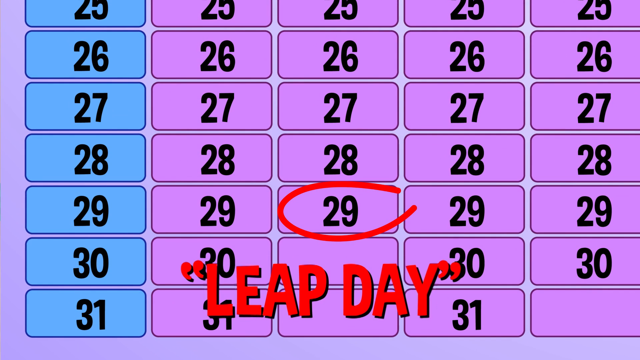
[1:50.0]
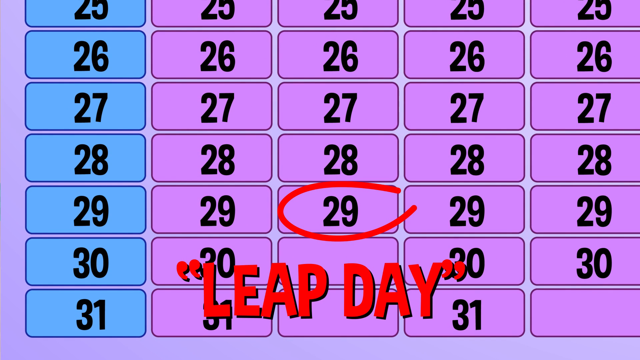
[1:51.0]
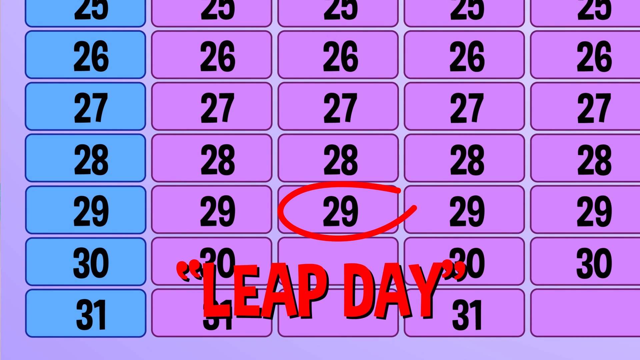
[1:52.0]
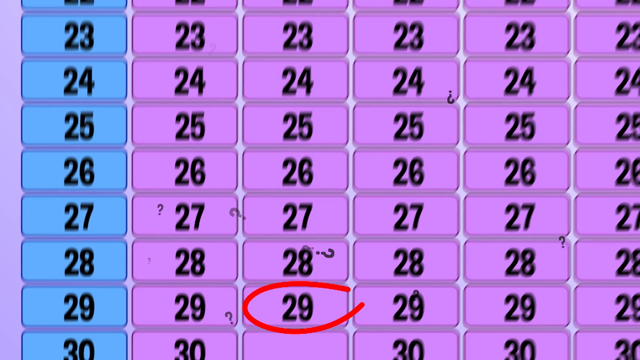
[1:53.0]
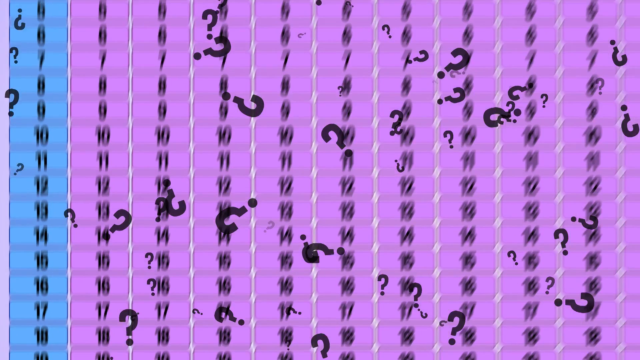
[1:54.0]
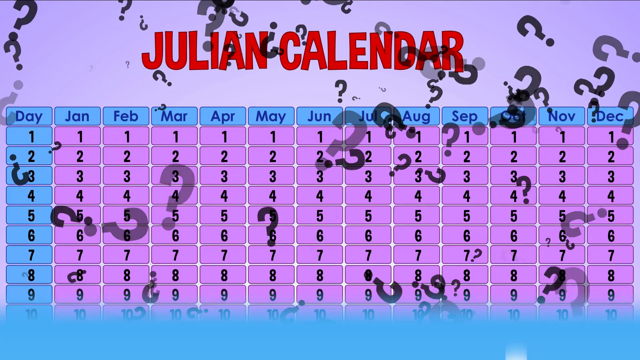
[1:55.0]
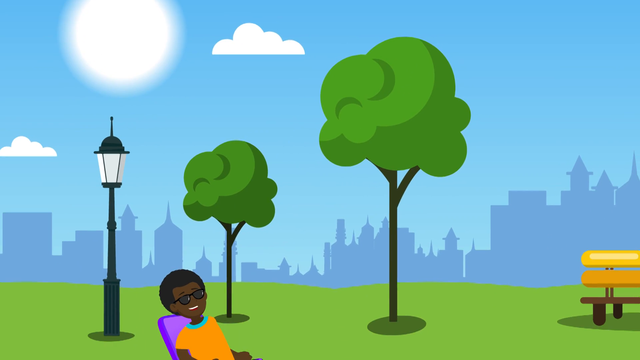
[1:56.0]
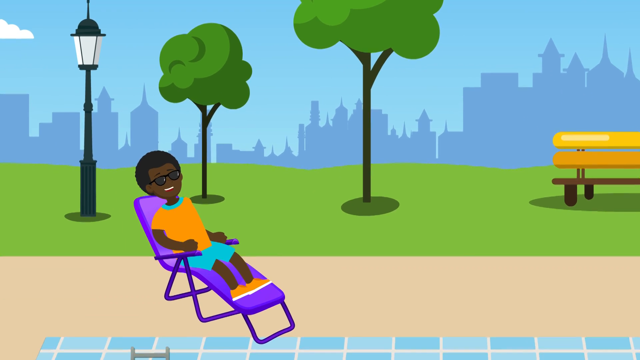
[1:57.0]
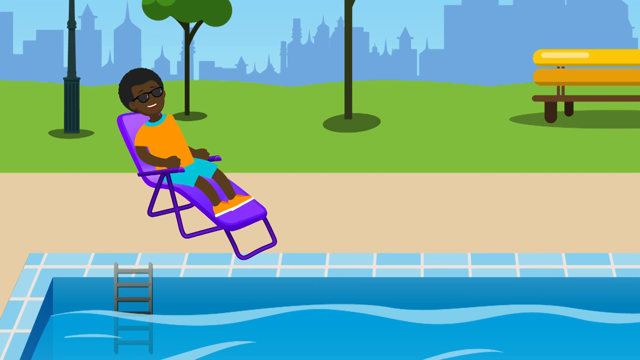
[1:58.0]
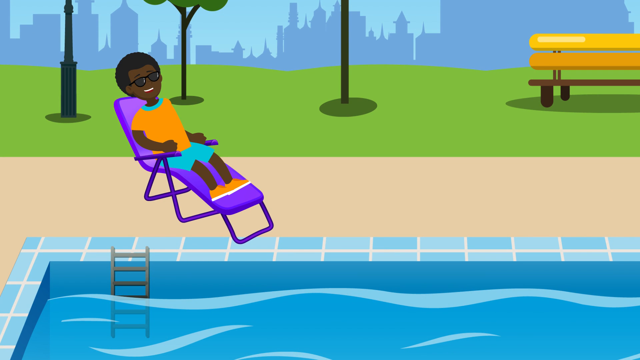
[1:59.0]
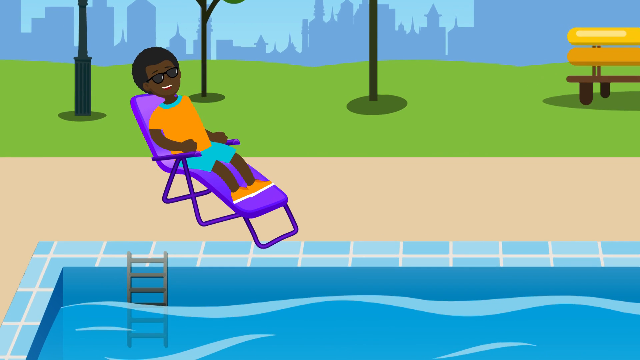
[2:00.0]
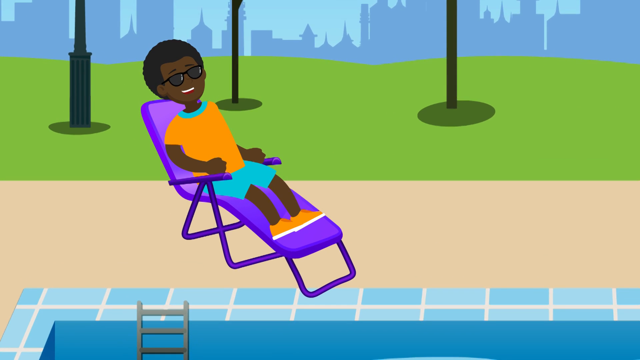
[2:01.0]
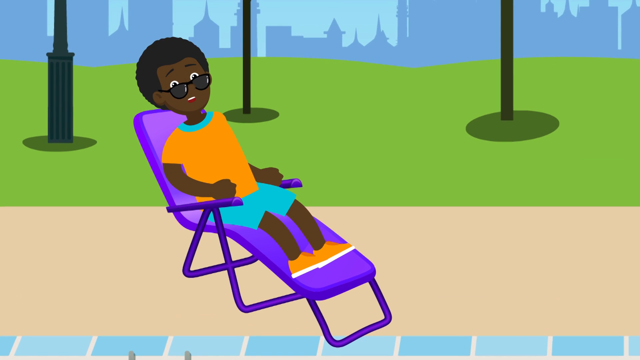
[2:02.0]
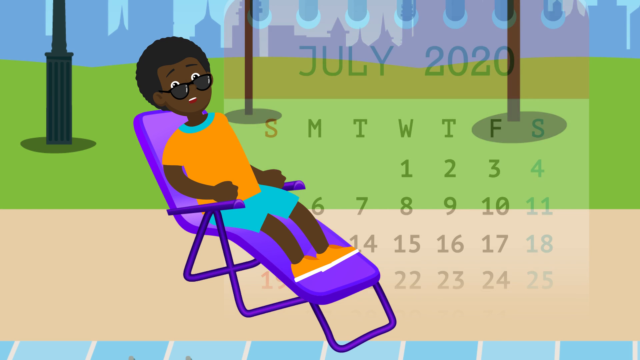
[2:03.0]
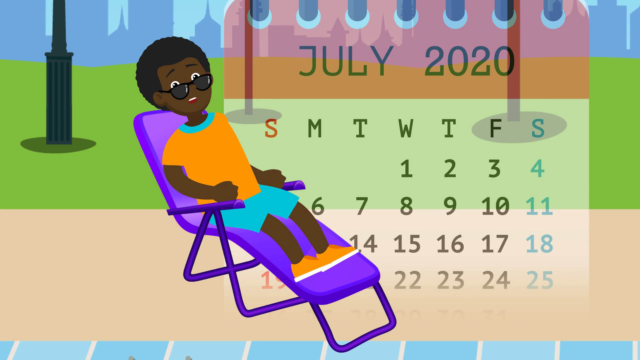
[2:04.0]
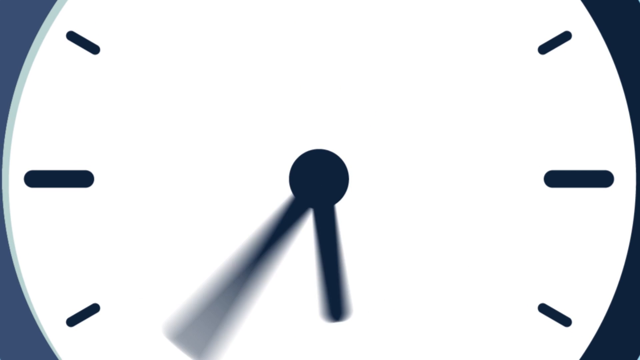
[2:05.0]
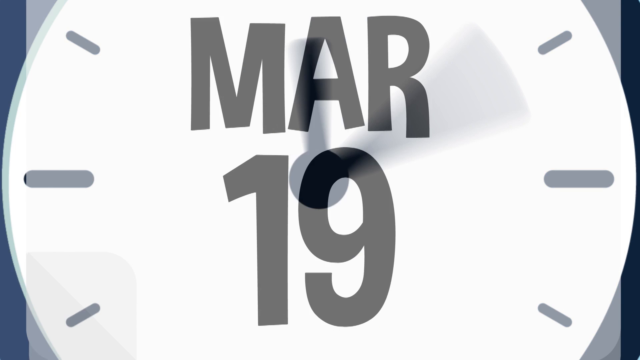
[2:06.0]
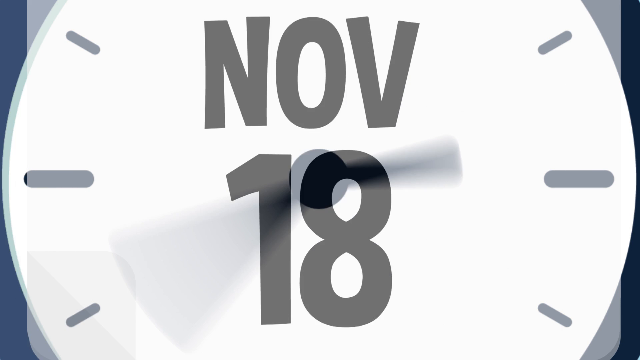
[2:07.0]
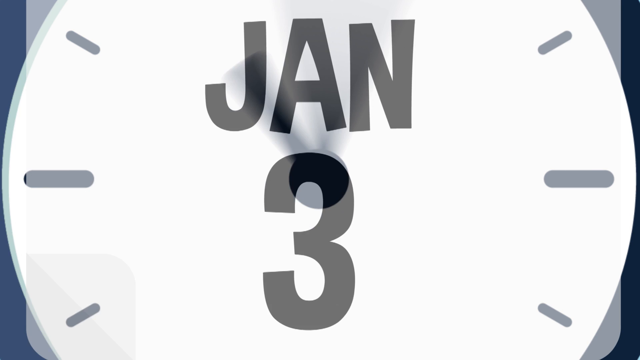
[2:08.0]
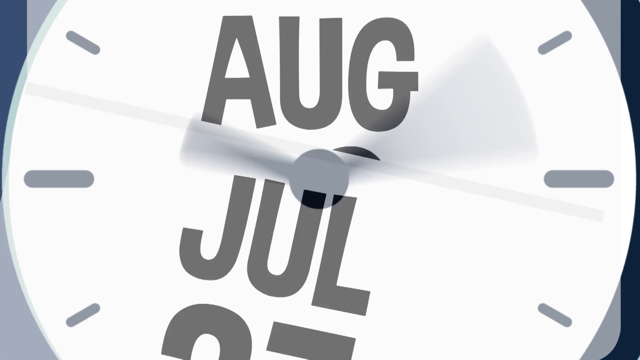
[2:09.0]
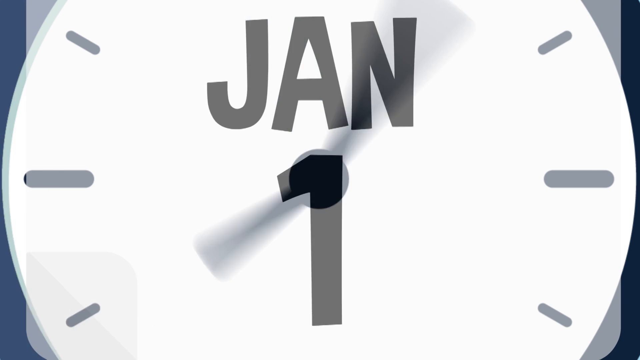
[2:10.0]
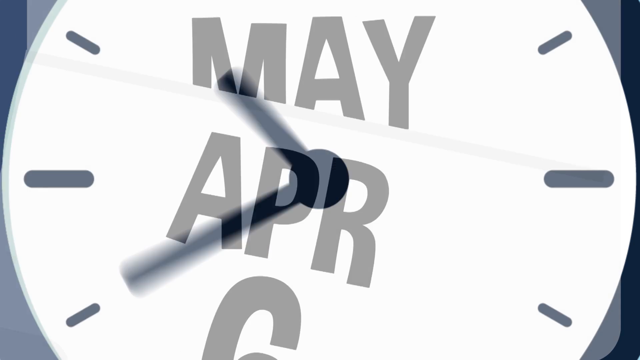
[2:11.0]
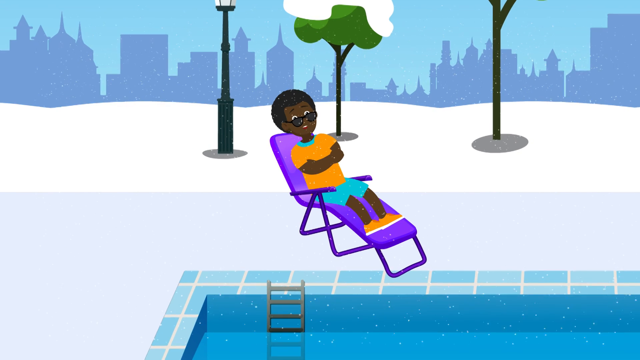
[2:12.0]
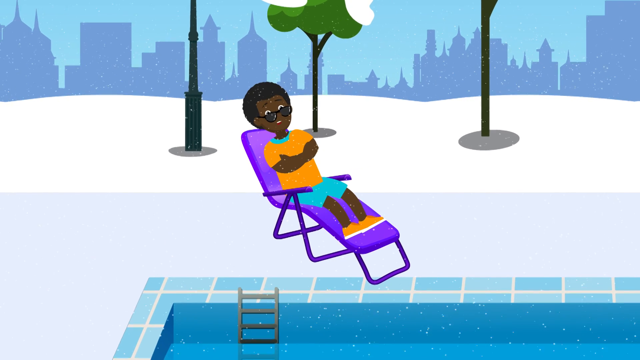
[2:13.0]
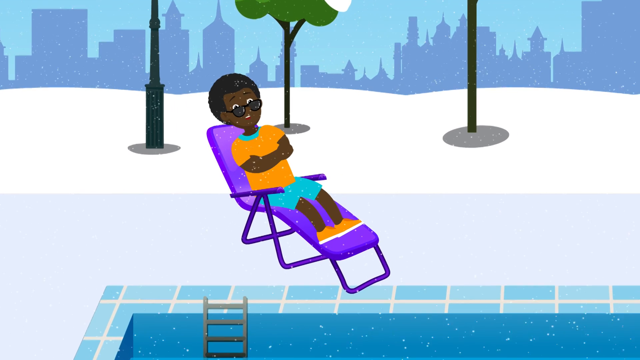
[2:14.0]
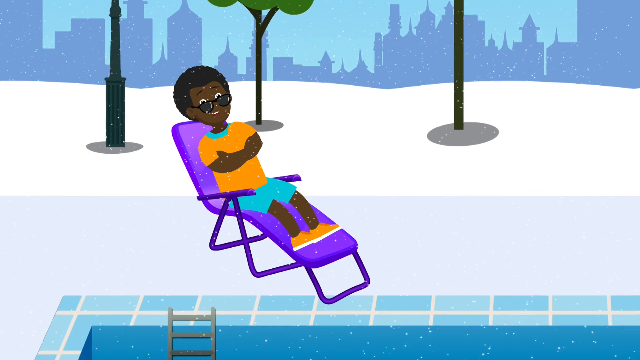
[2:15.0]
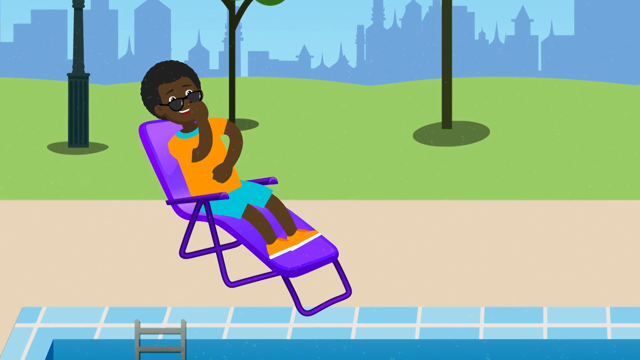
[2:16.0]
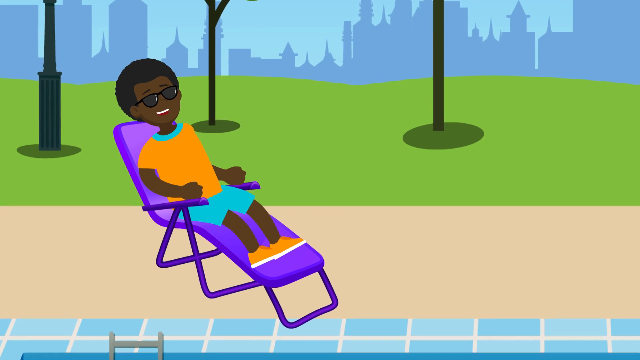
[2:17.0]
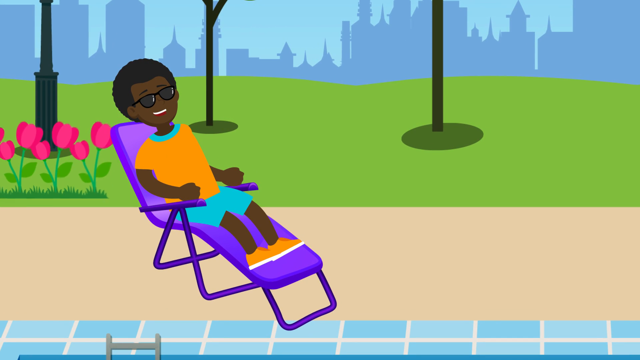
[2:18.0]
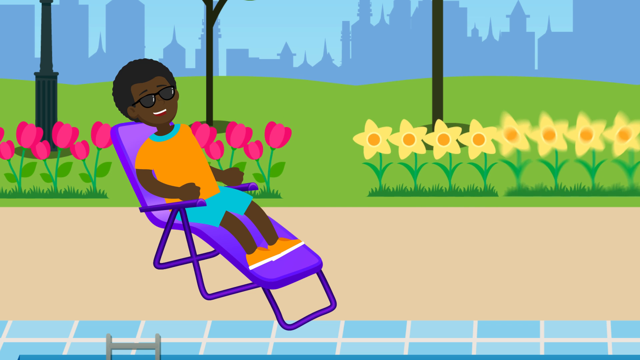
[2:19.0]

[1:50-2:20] February 29 is shown with the text "LEAP DAY" below it, written in red and in quotation marks. Question marks then appear around the entire screen. The scene changes to a park with two trees, a lamp and a chair on the right. Further ahead is a pool with blue water and metal stairs on the left. A little above those stairs, a man lies on a blue beach chair; he has dark glasses, dark skin, black hair in an afro style, an orange shirt, blue shorts and orange shoes, and he seems to be enjoying the day. Behind him a calendar for July 2020 appears, going from day 1 to day 25. The shot cuts to another calendar in which the days pass very quickly from January to December. Once that calendar and the clock it was overlaid on are removed, the same man is seen with the park full of snow; he is cold and rubs his arms. The scene then instantly changes to spring: flowers come out of the ground, the man is no longer cold, and he is enjoying his day again.